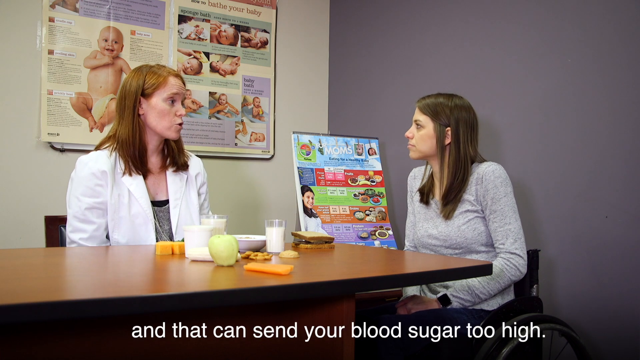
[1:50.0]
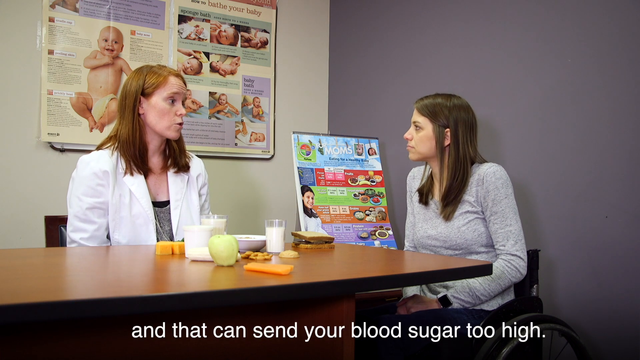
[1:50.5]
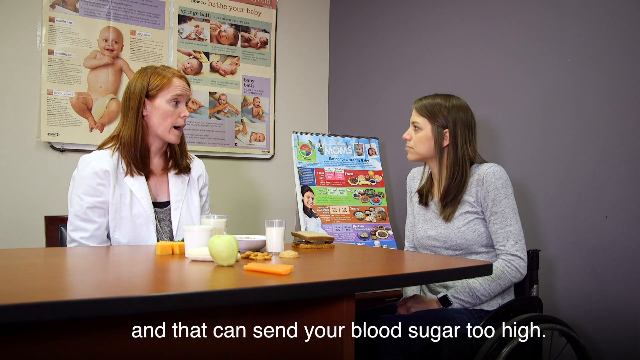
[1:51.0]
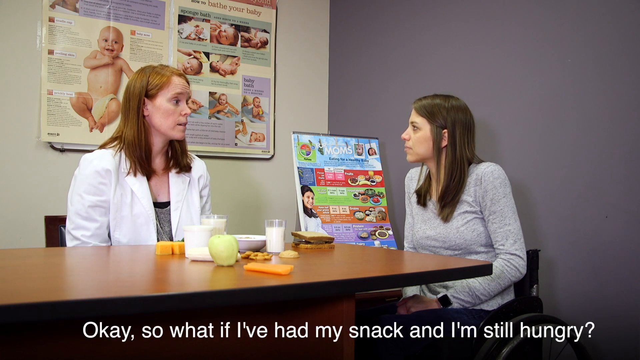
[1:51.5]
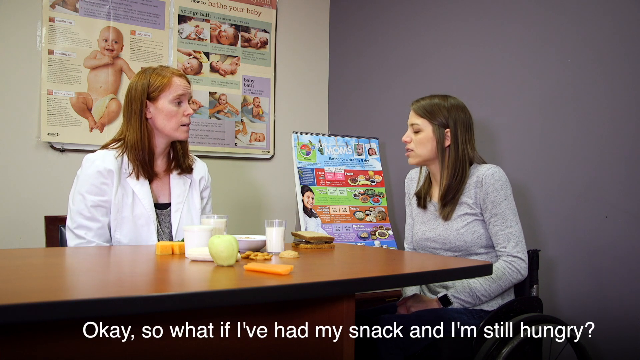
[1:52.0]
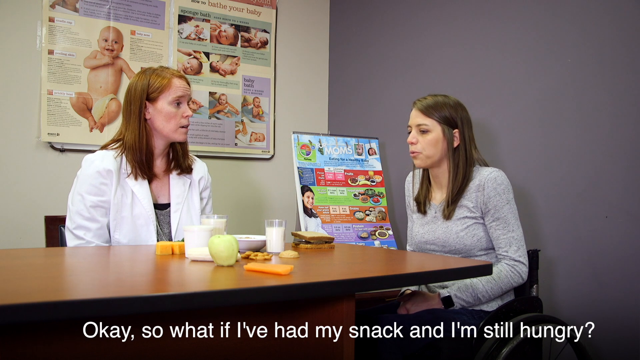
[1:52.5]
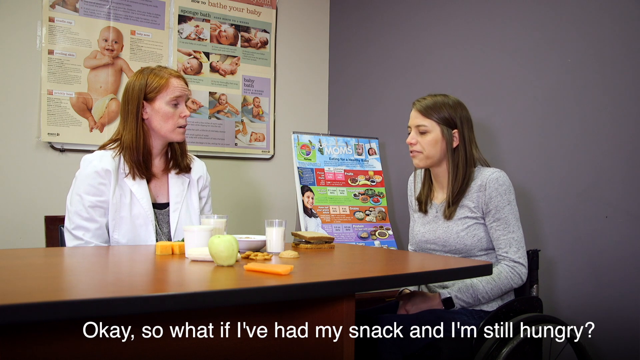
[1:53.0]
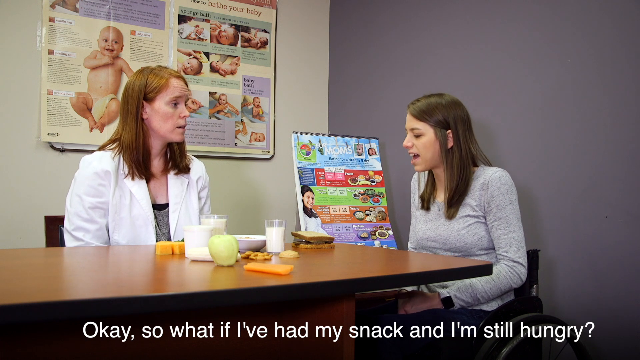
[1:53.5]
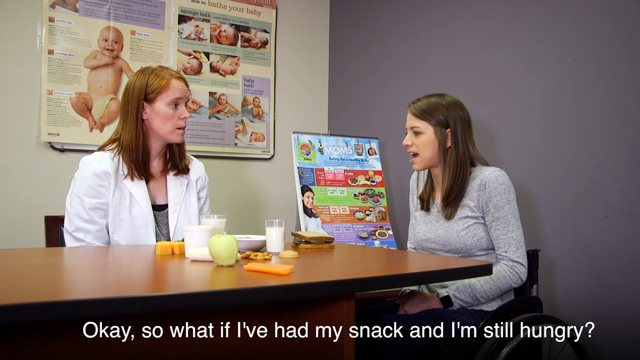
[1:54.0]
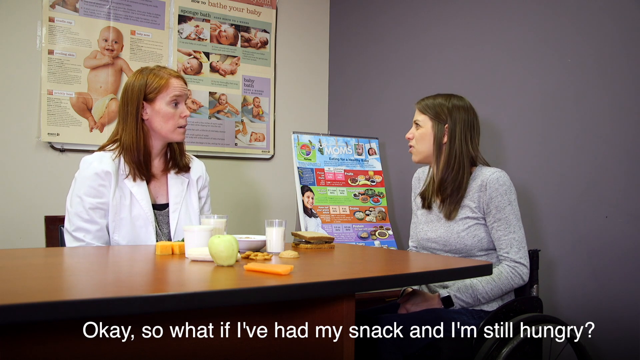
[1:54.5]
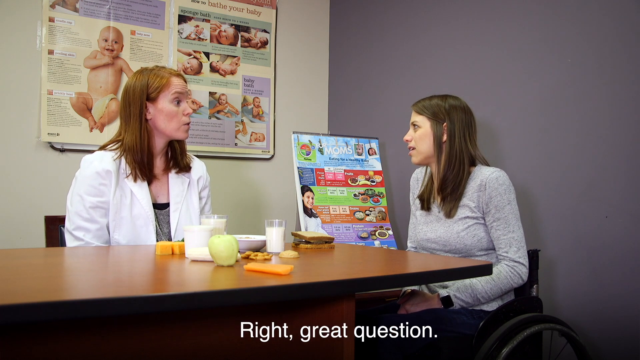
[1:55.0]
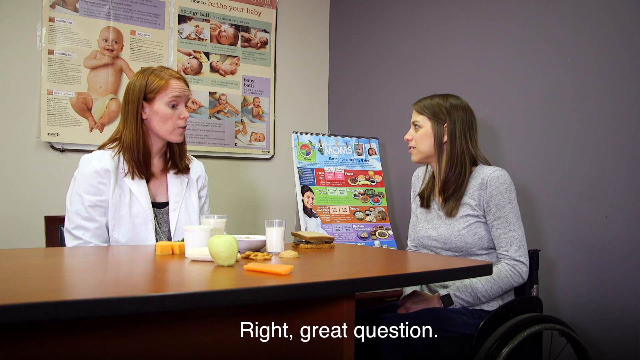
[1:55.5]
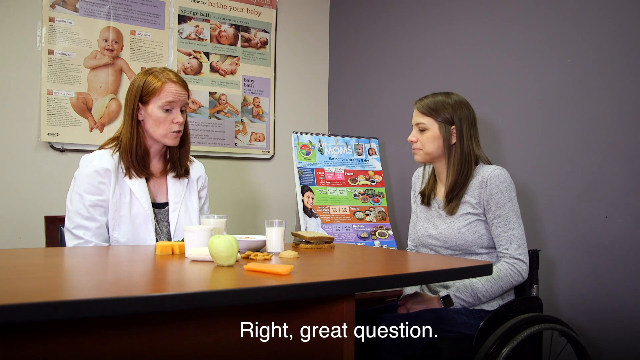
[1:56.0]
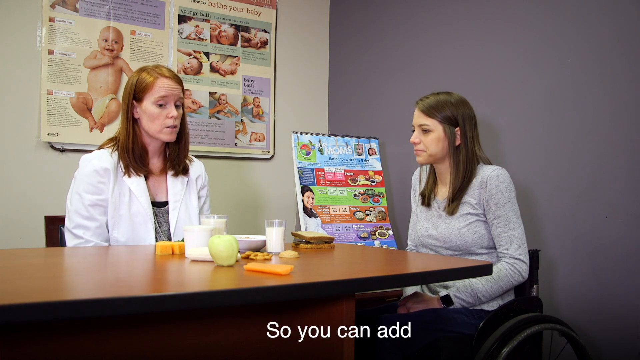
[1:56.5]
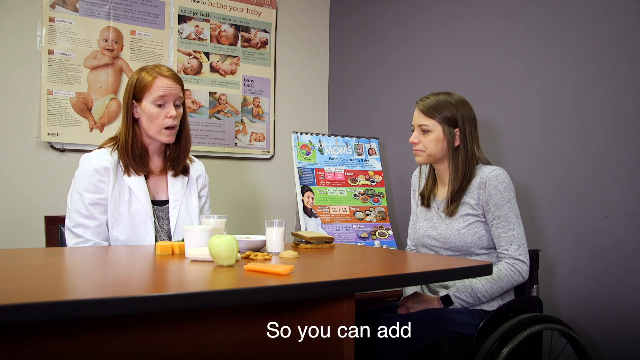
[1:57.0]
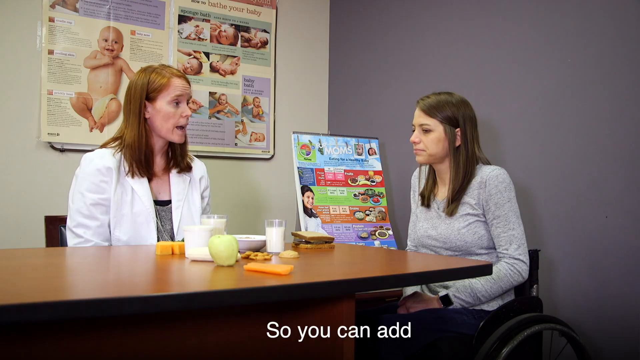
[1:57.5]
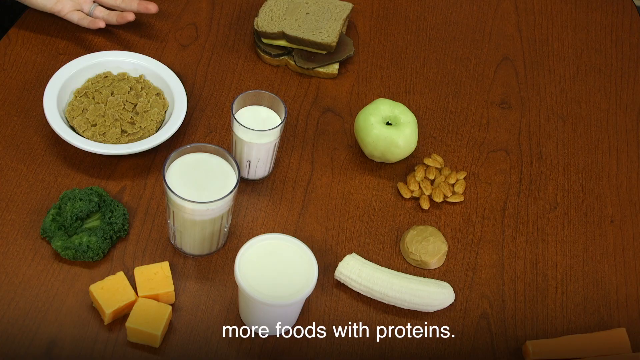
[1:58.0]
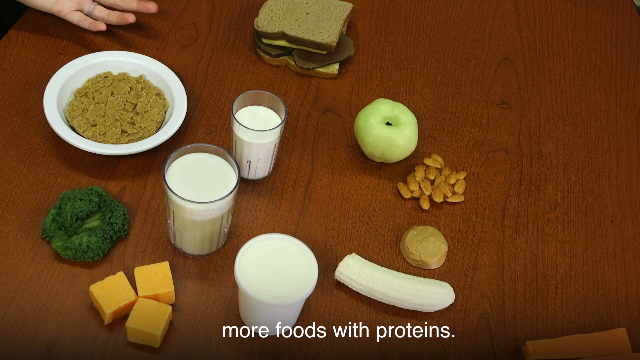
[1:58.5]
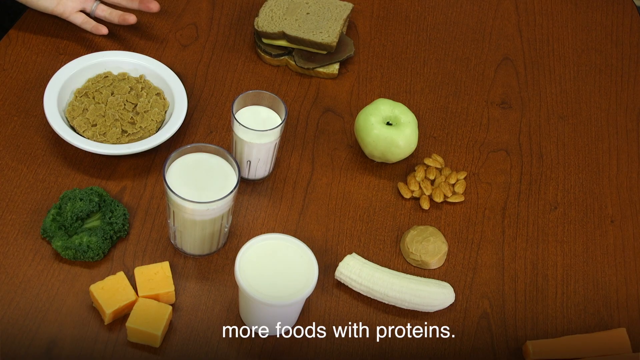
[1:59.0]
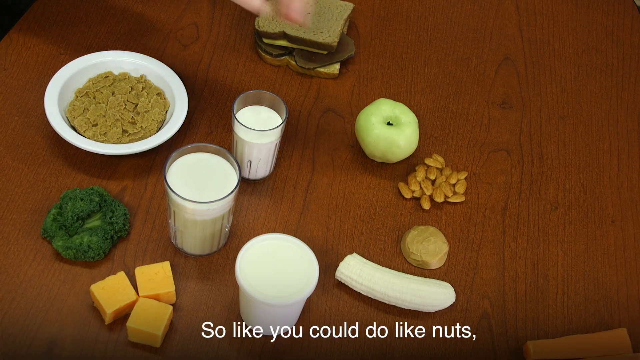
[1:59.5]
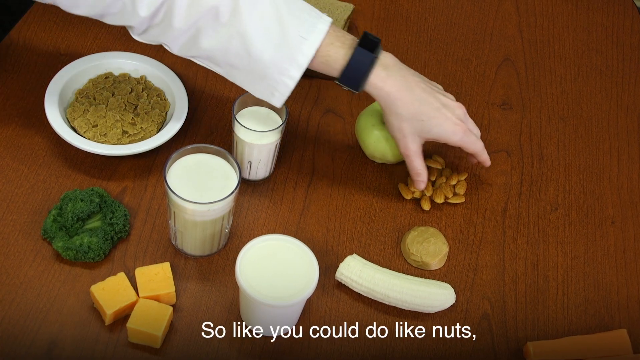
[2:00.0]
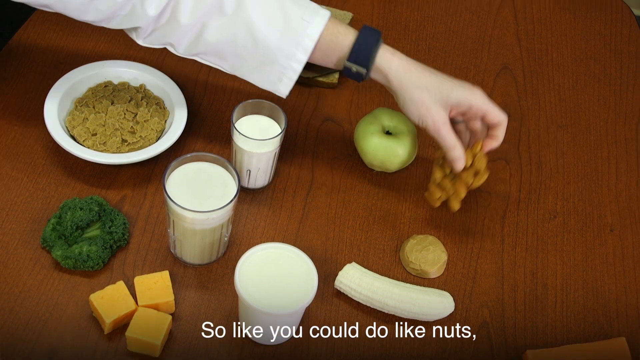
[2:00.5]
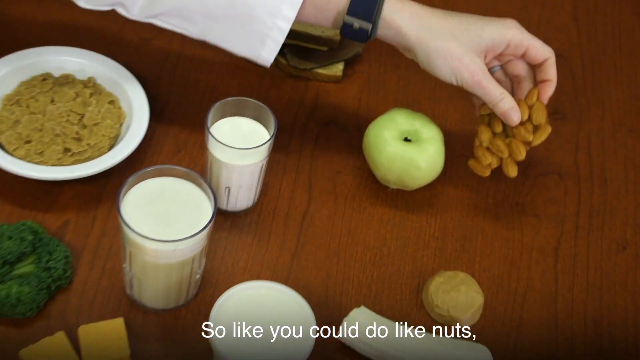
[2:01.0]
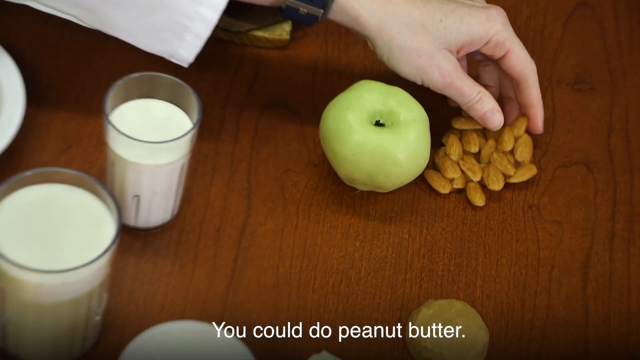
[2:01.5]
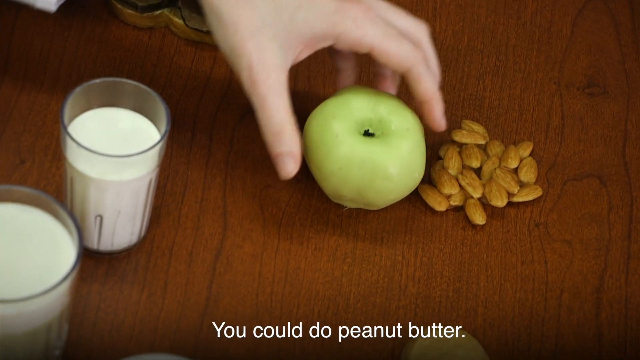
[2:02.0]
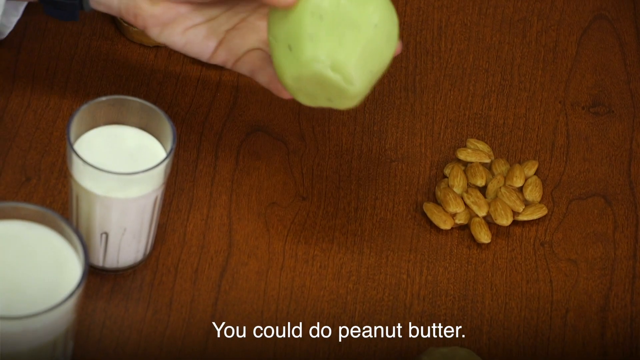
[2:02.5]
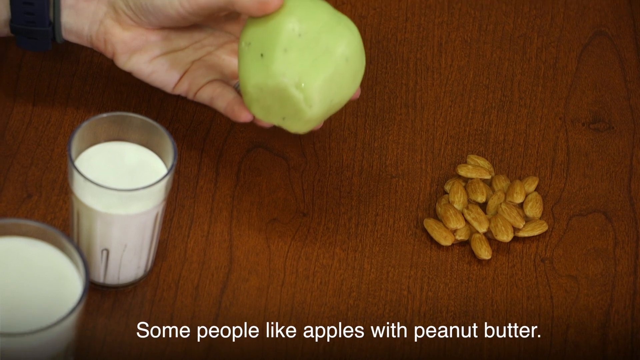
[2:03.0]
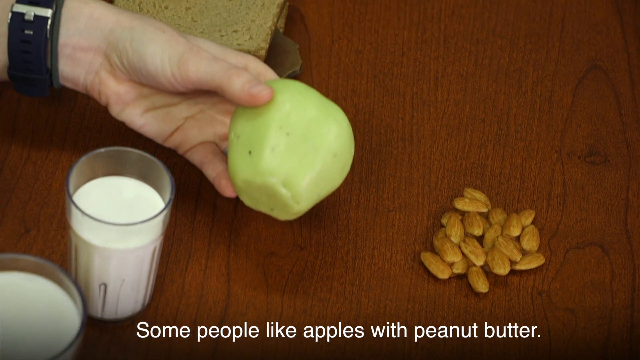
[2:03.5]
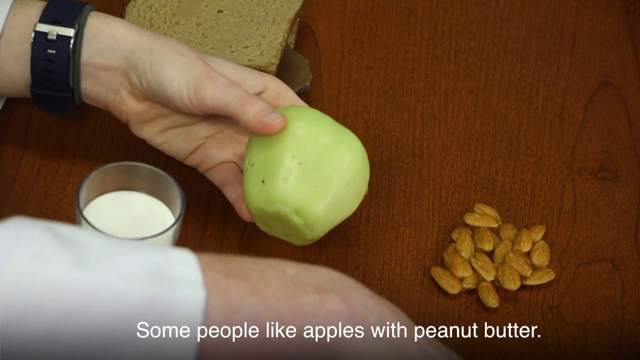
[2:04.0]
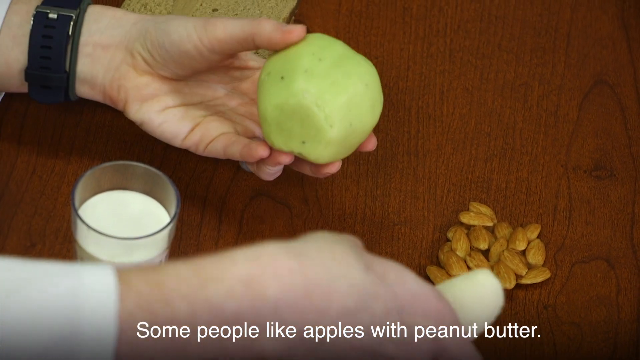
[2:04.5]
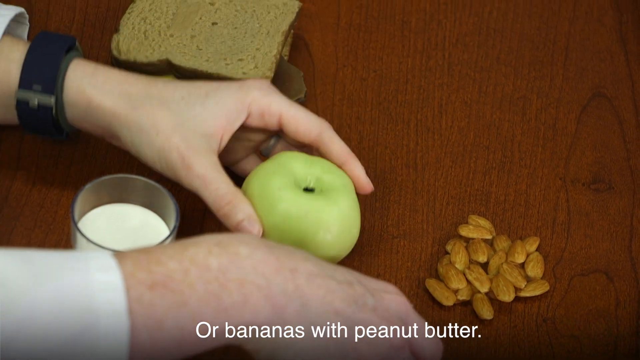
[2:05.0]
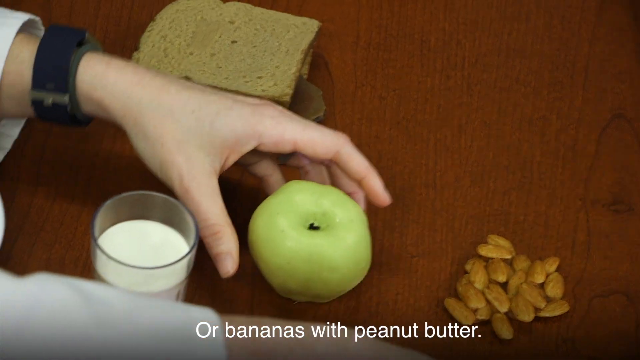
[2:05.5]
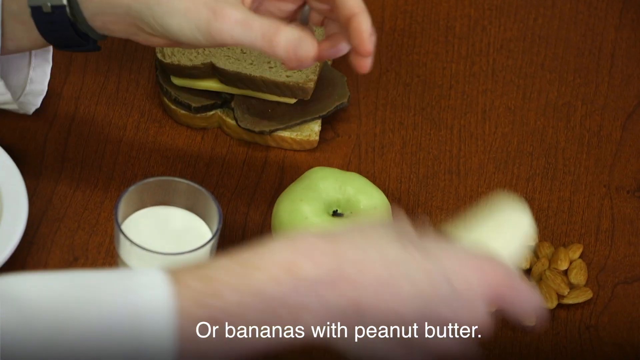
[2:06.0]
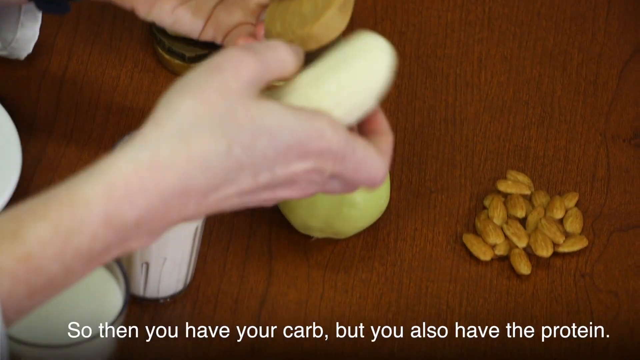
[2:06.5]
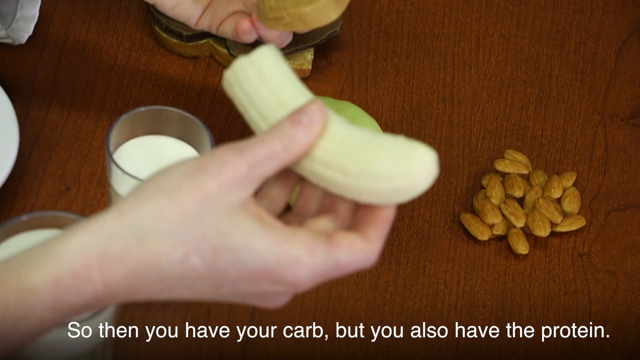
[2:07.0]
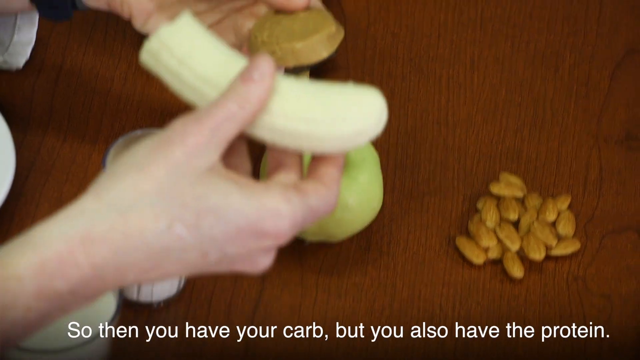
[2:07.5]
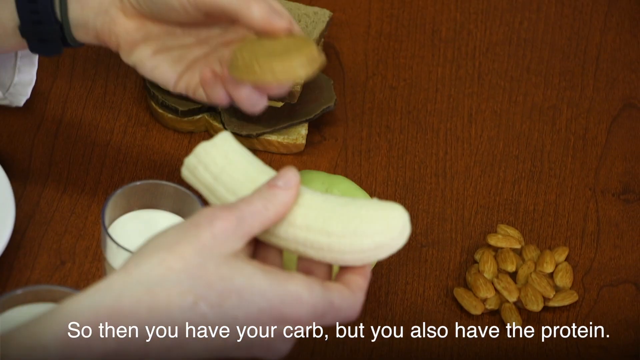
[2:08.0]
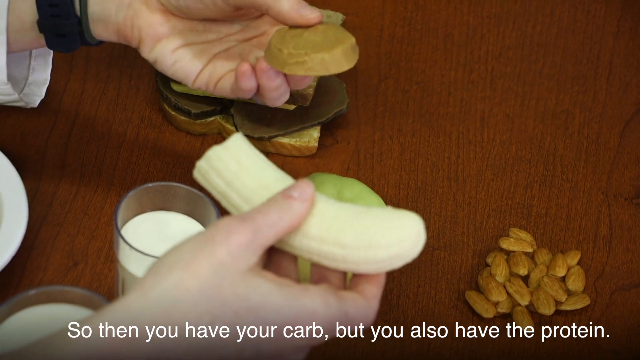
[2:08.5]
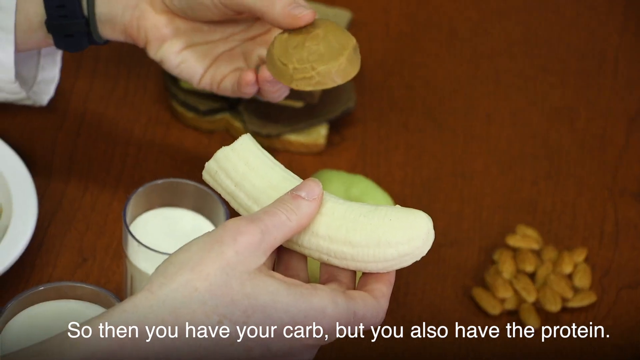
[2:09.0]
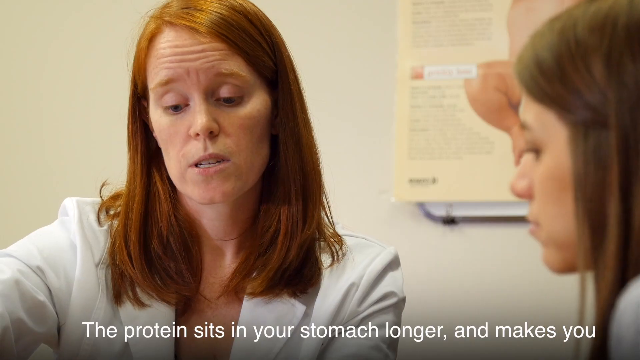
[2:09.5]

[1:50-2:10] The conversation continues between the doctor or nutritionist and the pregnant woman. The doctor, a younger woman with long red hair, wears a white coat. The patient wears a gray long-sleeved sweatshirt and has long dark hair. The patient asks what to do if she is still hungry after her snack, and the doctor suggests adding foods with protein, such as peanut butter with apples or bananas.